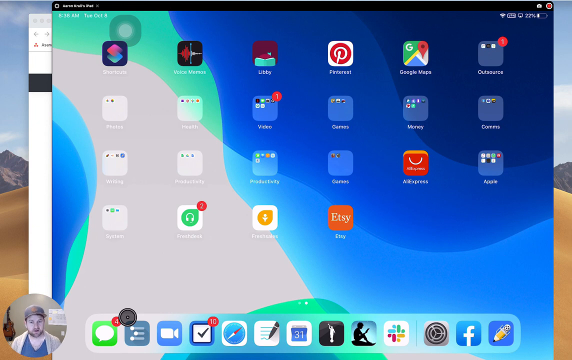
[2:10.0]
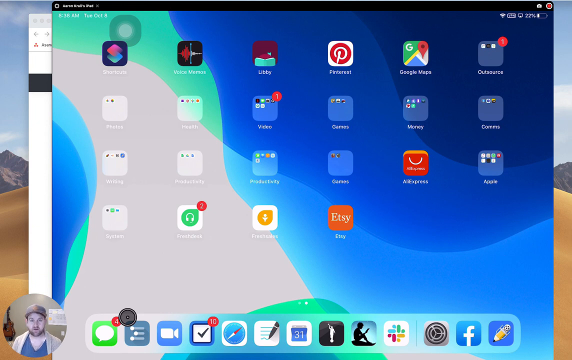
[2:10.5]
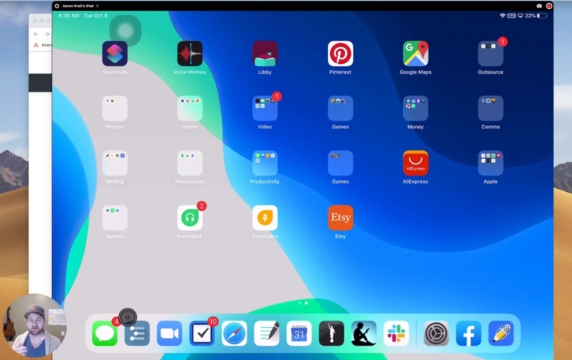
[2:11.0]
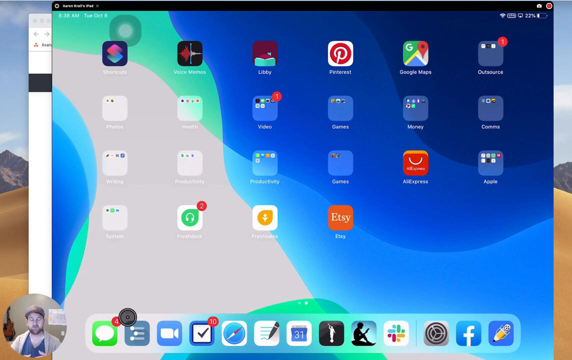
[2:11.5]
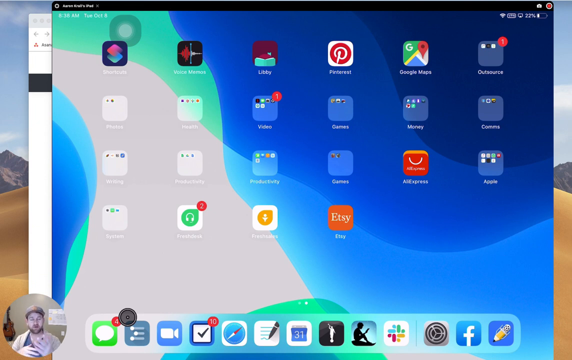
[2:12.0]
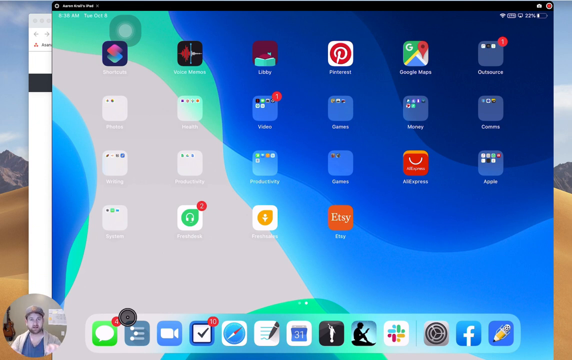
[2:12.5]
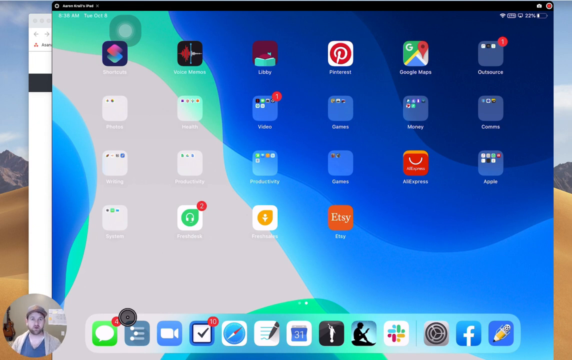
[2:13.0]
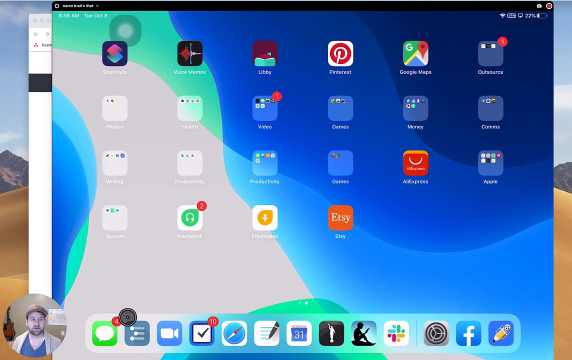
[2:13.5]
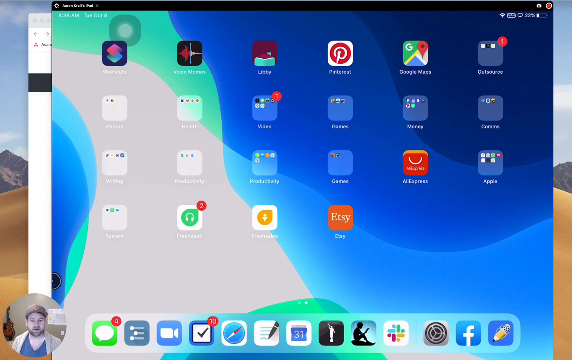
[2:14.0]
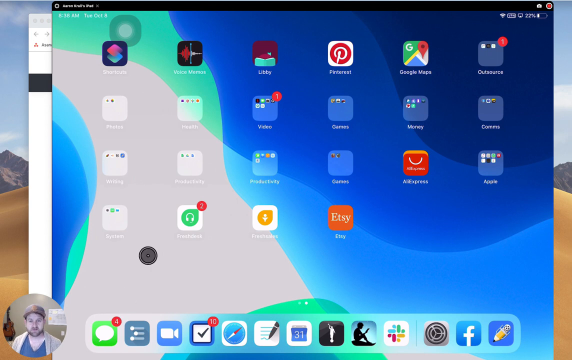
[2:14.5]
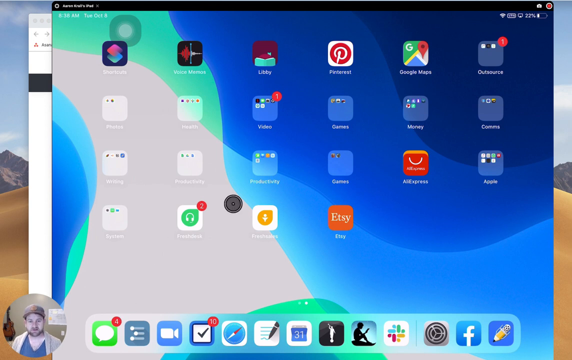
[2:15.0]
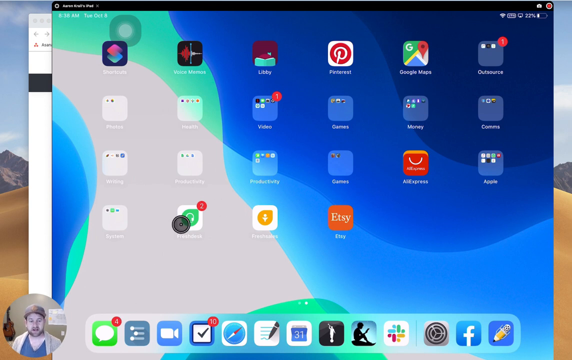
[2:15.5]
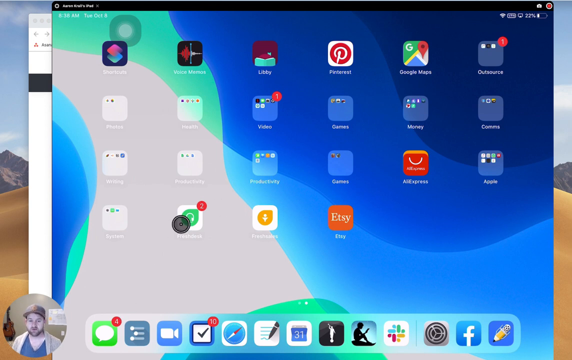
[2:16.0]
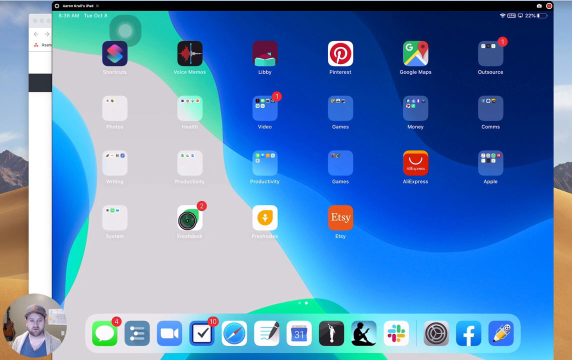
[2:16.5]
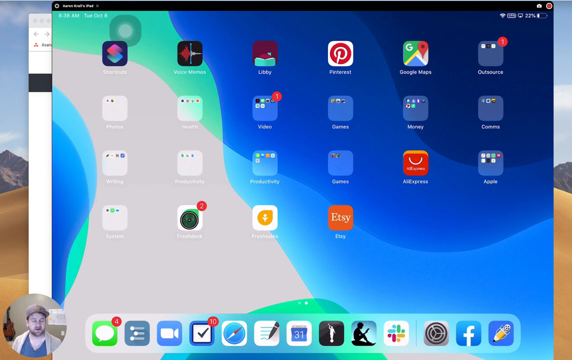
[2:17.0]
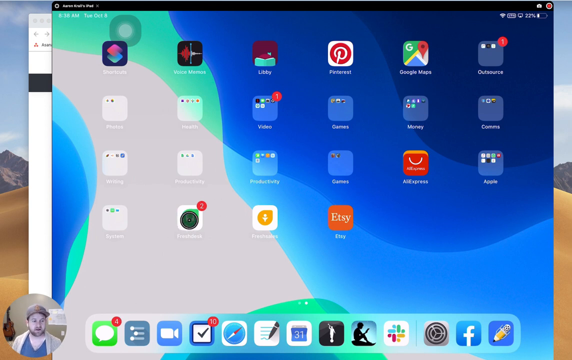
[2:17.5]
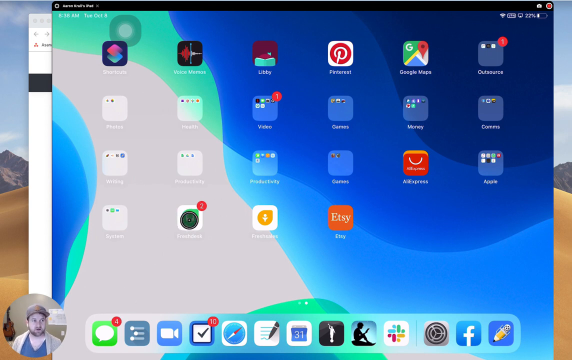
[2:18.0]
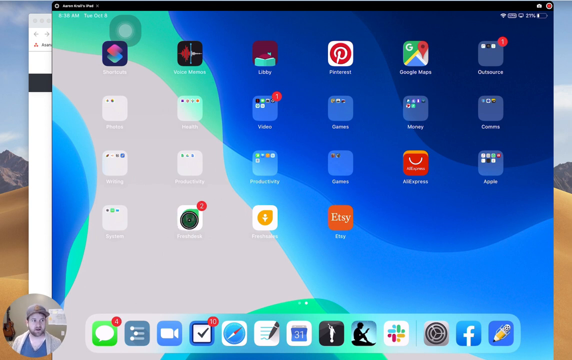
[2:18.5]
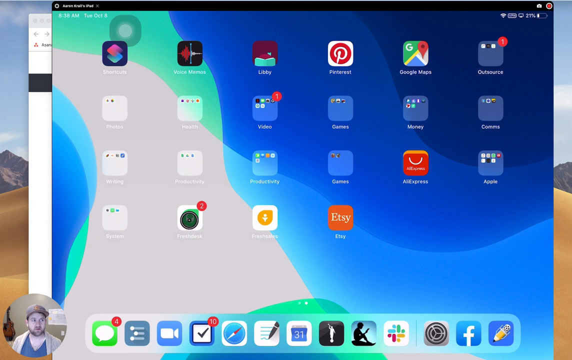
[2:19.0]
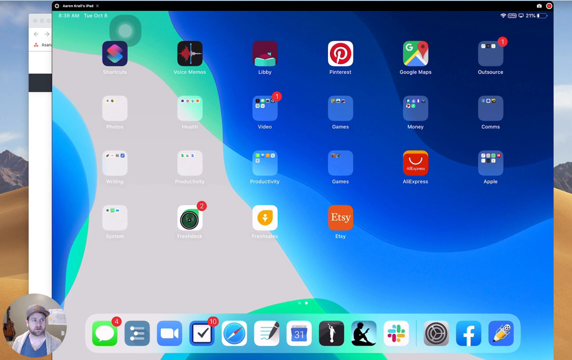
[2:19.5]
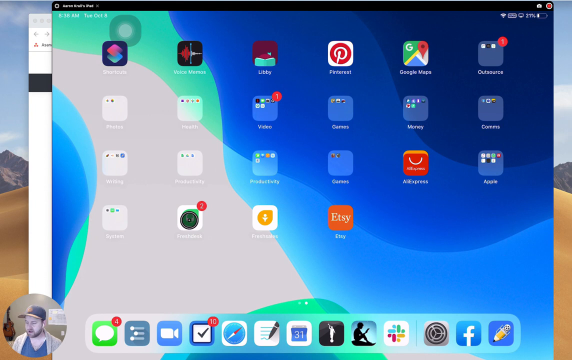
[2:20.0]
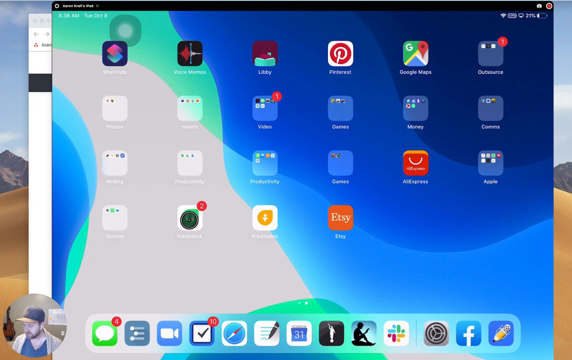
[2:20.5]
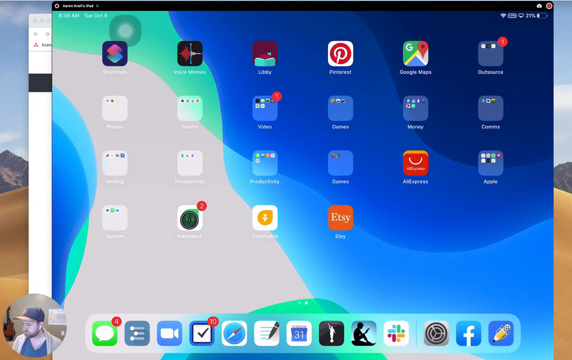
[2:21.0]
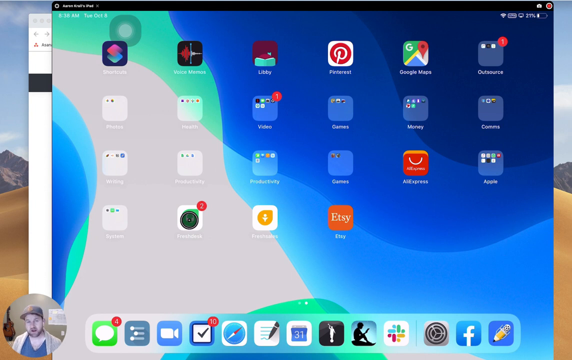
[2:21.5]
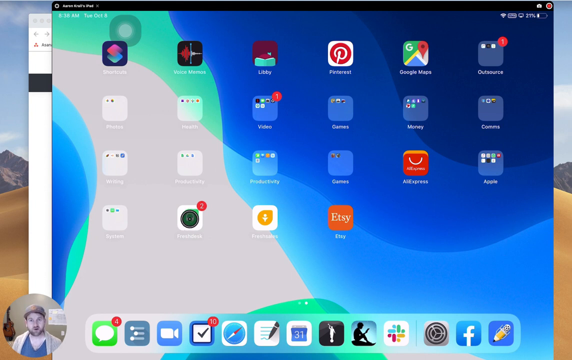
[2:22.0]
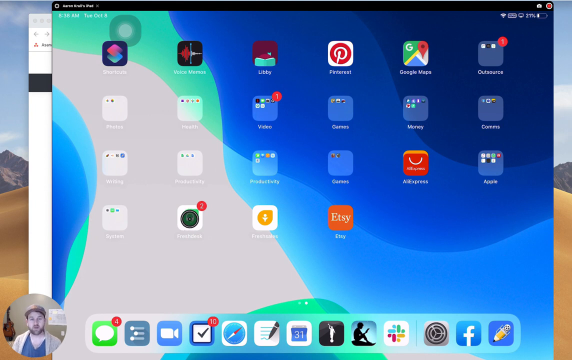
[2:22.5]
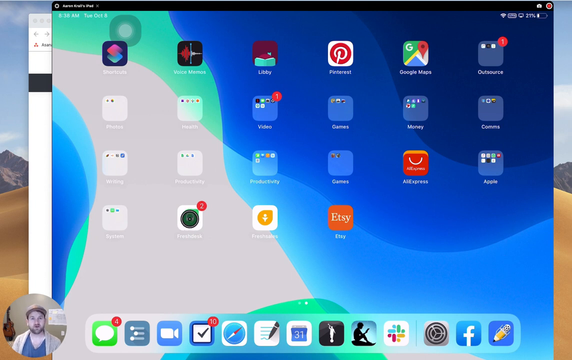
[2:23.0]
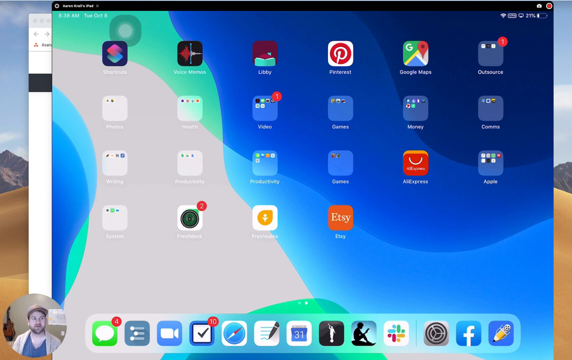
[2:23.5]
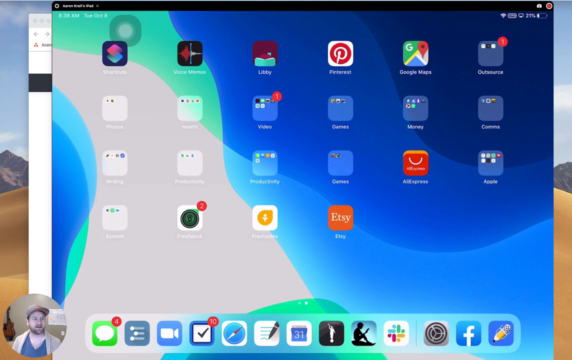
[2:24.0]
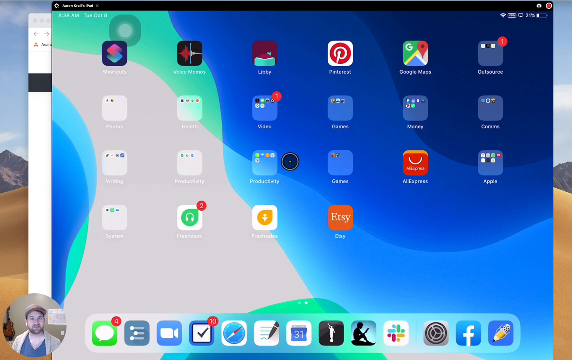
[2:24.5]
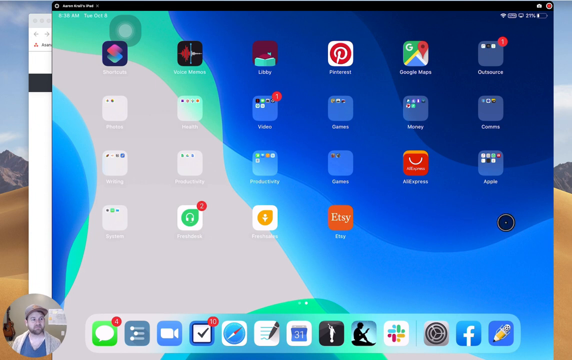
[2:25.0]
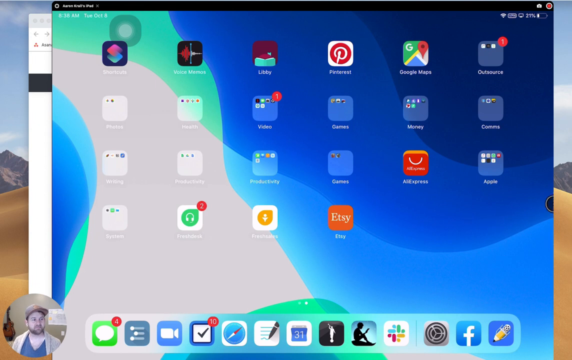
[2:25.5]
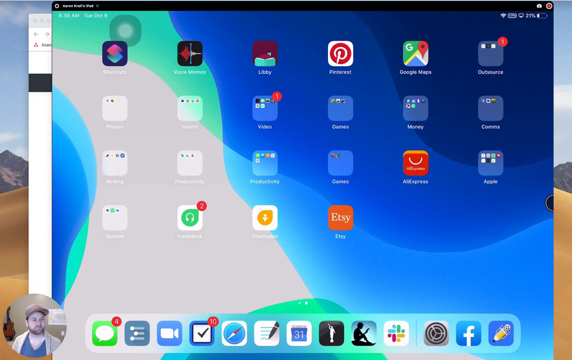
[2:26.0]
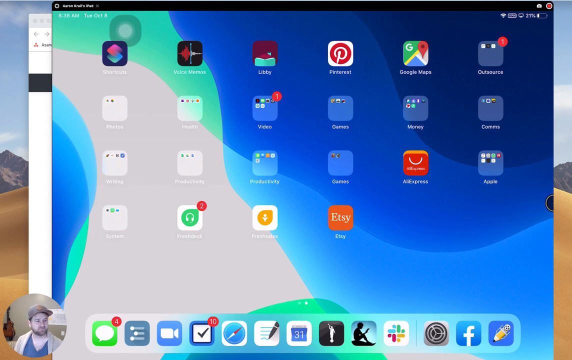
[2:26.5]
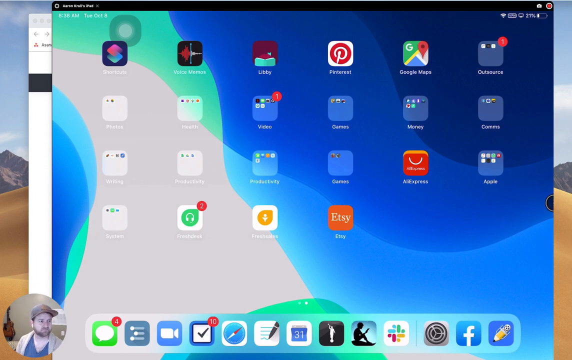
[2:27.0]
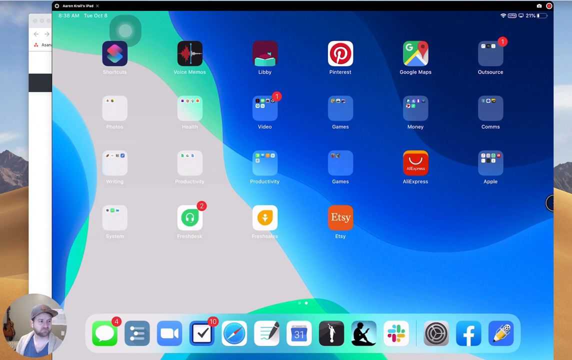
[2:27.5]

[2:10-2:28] The screen shows many apps on his computer, categorized into sections including events, games, money, Apple, playtime and Etsy, among others. He uses his computer mouse to scroll through and navigate among the apps. He also shows objects through his camera.